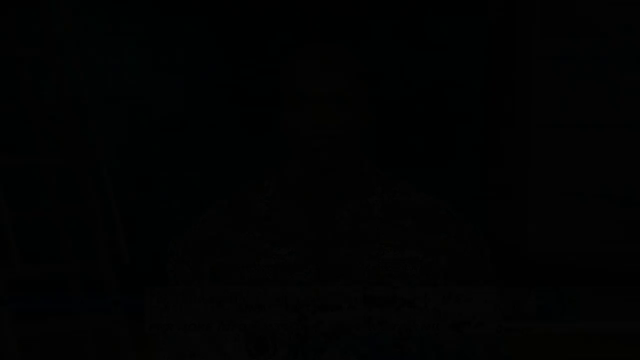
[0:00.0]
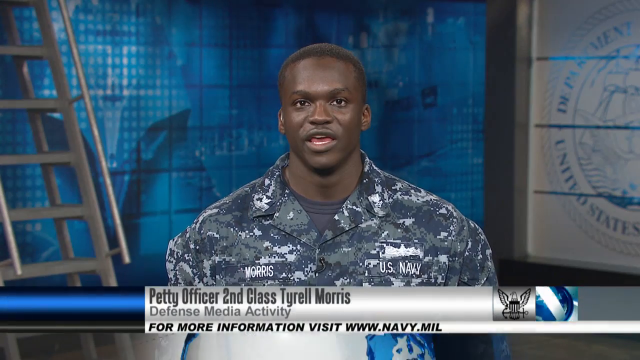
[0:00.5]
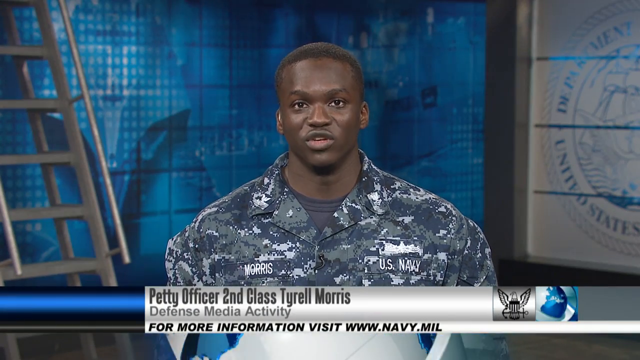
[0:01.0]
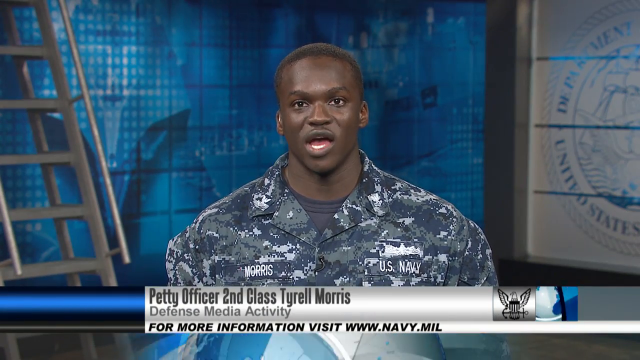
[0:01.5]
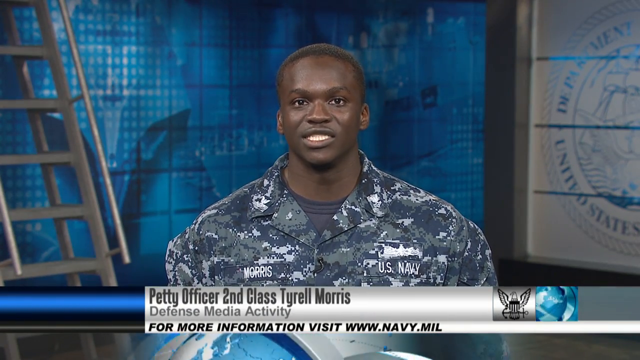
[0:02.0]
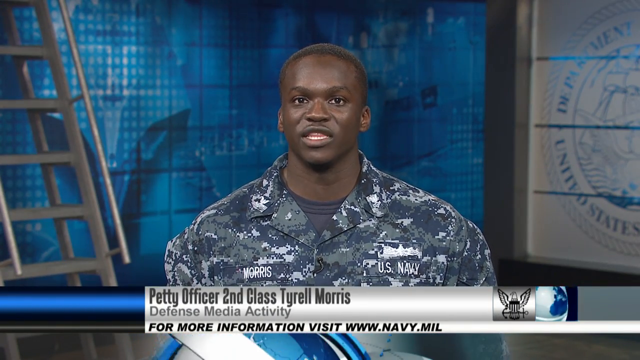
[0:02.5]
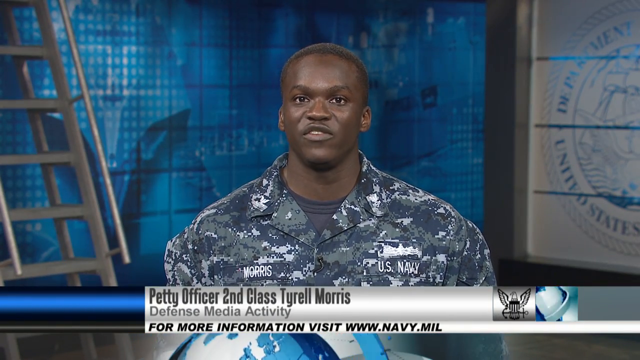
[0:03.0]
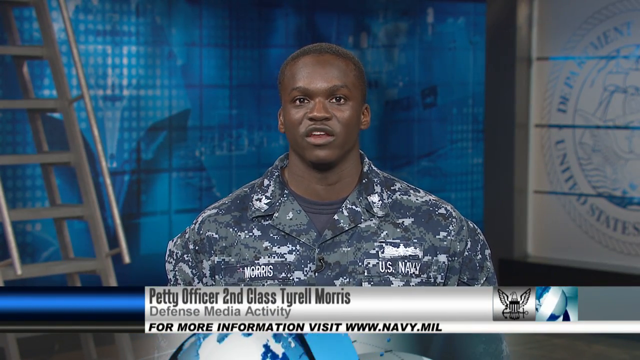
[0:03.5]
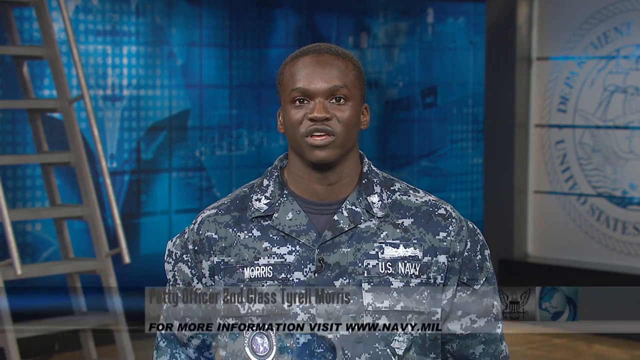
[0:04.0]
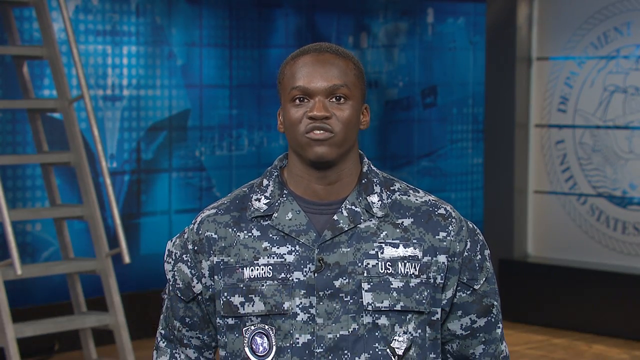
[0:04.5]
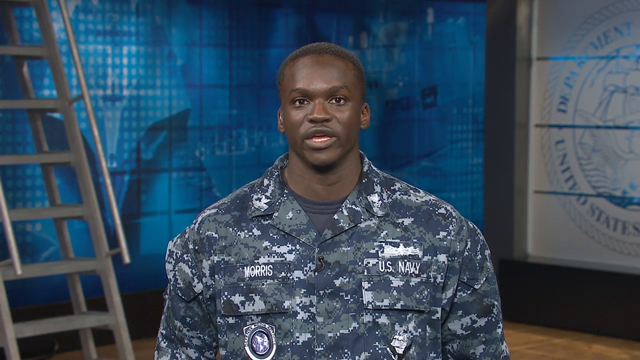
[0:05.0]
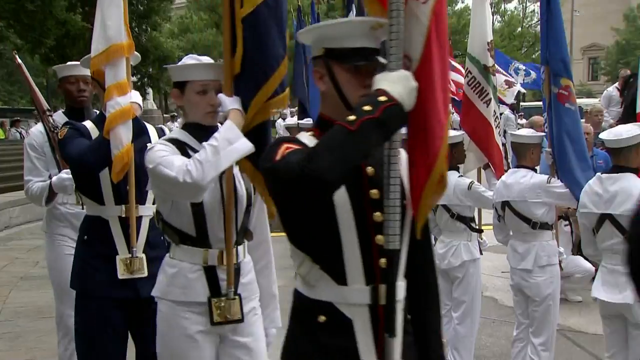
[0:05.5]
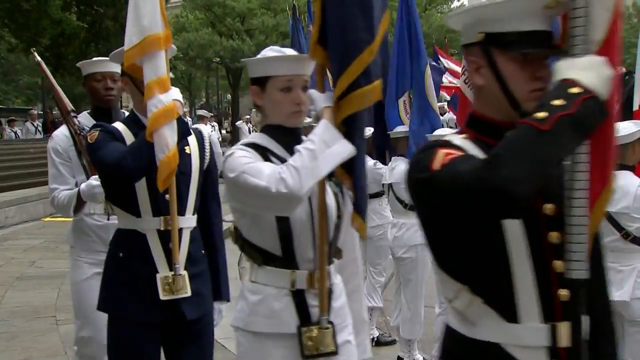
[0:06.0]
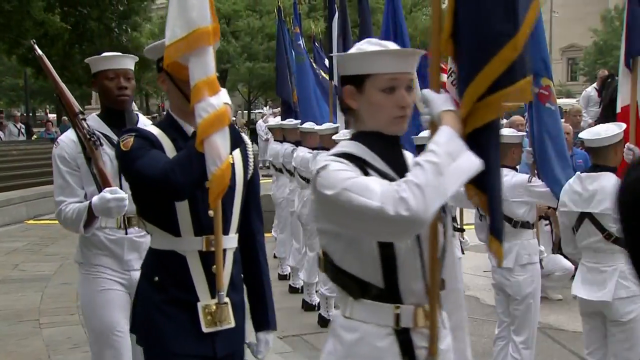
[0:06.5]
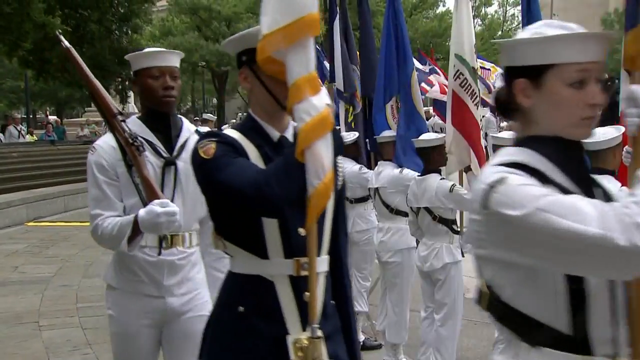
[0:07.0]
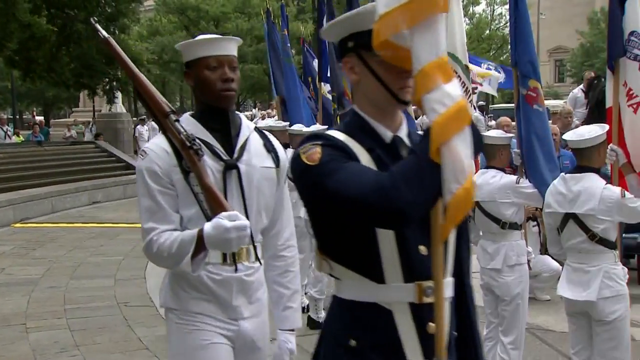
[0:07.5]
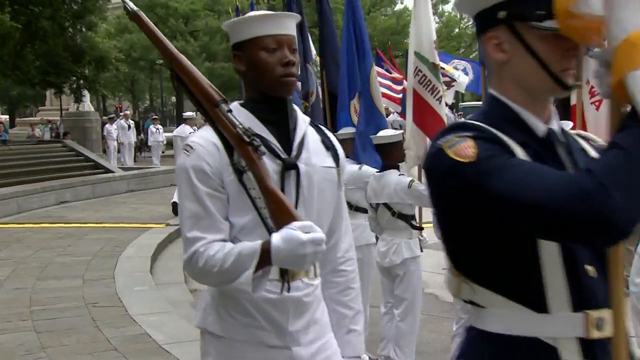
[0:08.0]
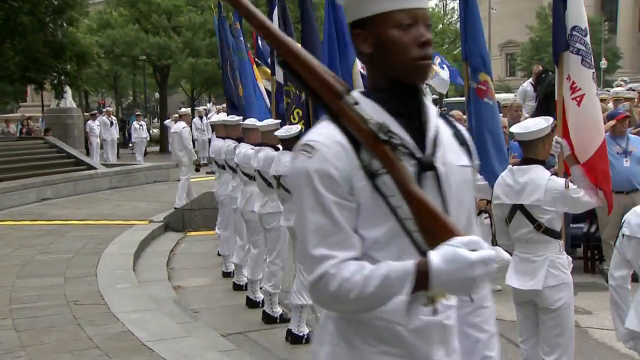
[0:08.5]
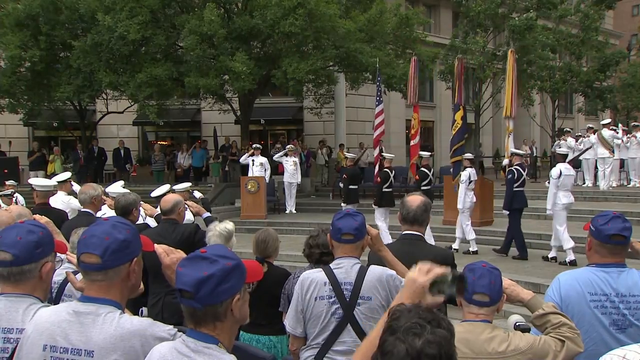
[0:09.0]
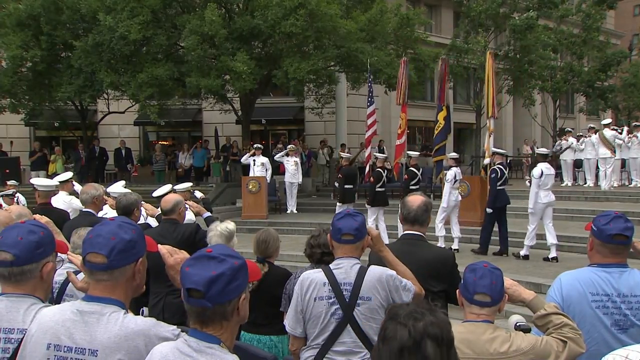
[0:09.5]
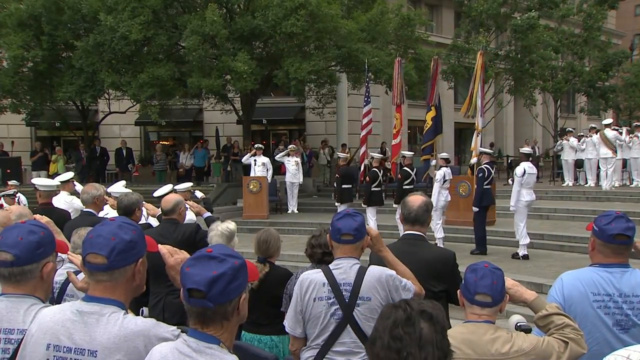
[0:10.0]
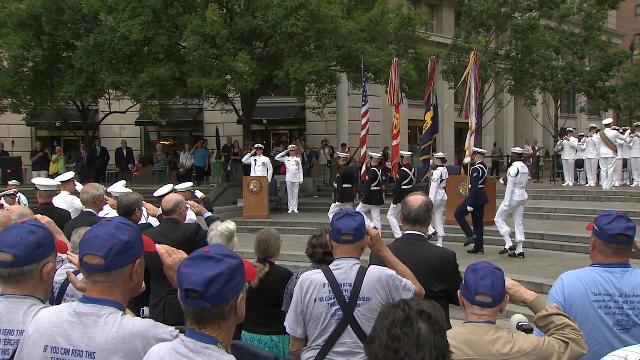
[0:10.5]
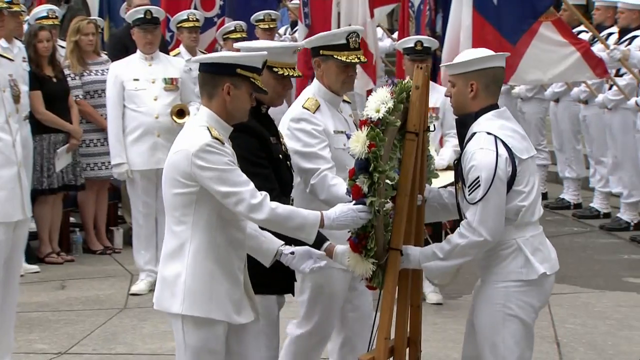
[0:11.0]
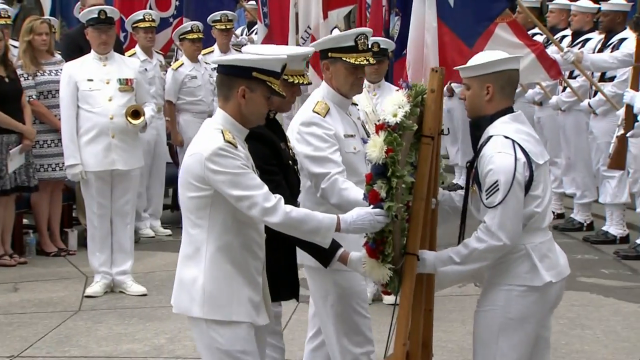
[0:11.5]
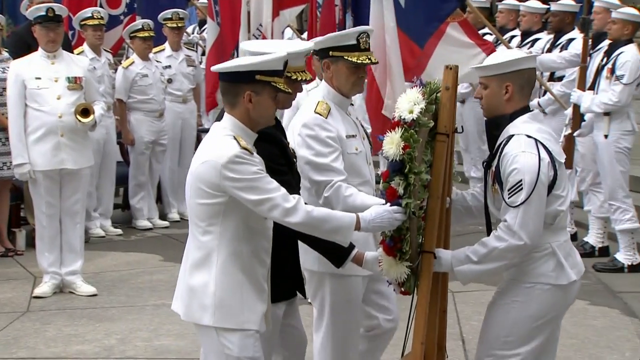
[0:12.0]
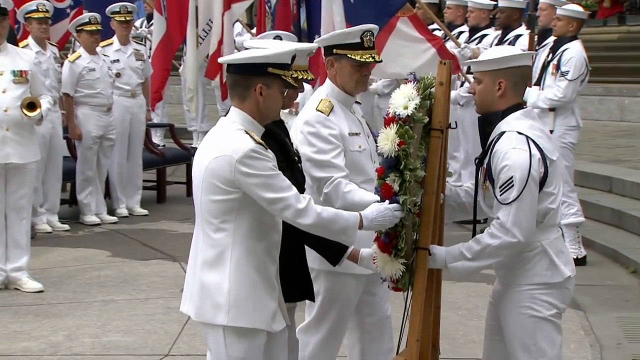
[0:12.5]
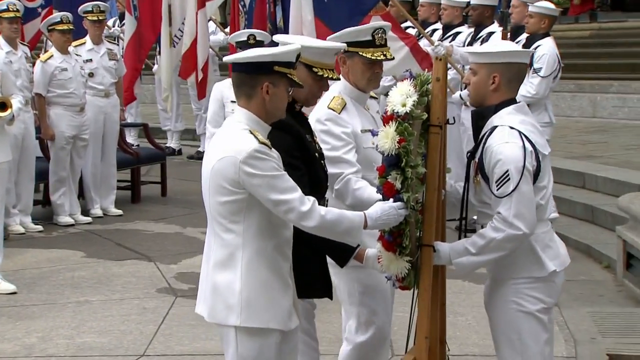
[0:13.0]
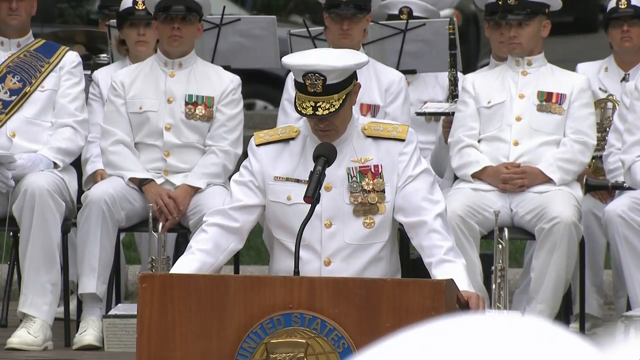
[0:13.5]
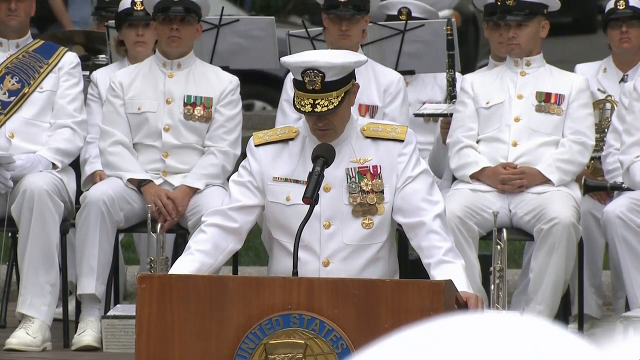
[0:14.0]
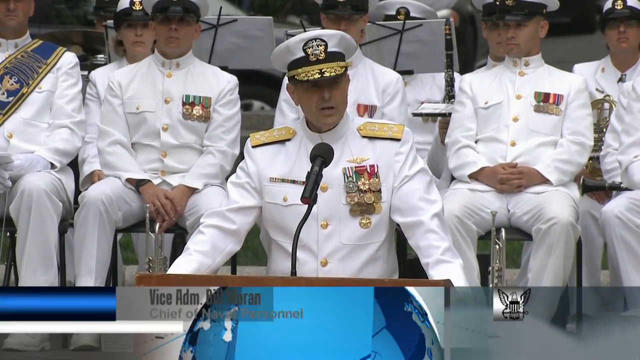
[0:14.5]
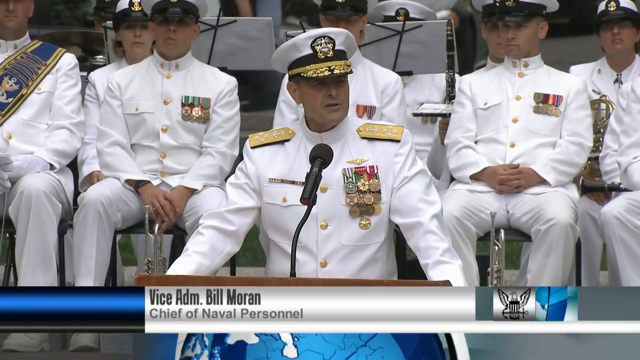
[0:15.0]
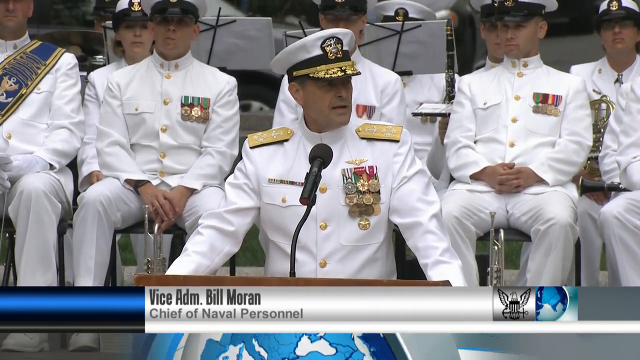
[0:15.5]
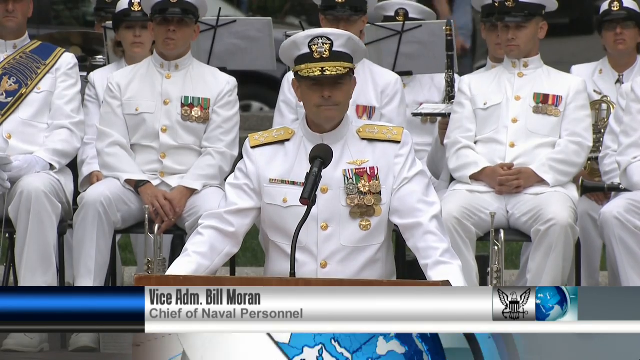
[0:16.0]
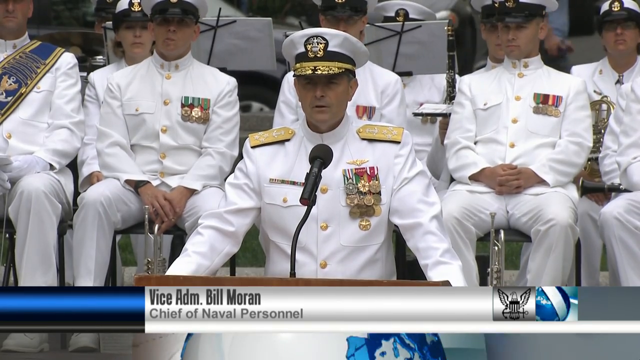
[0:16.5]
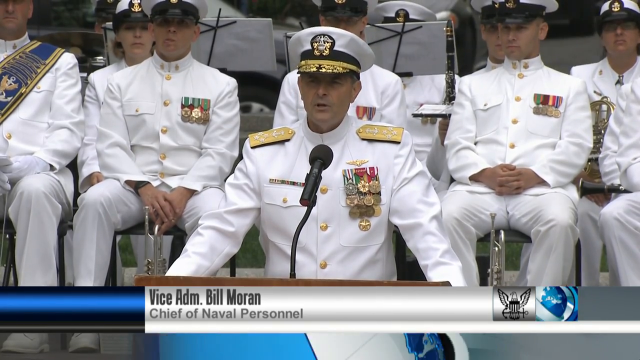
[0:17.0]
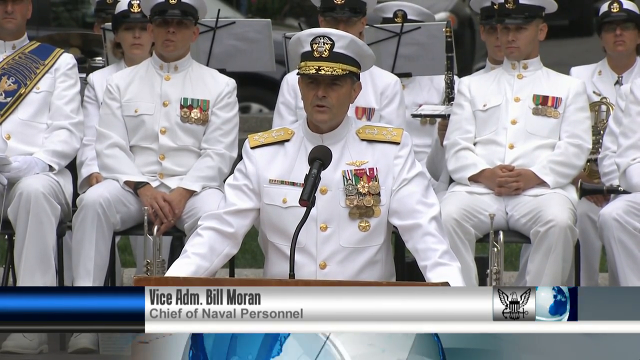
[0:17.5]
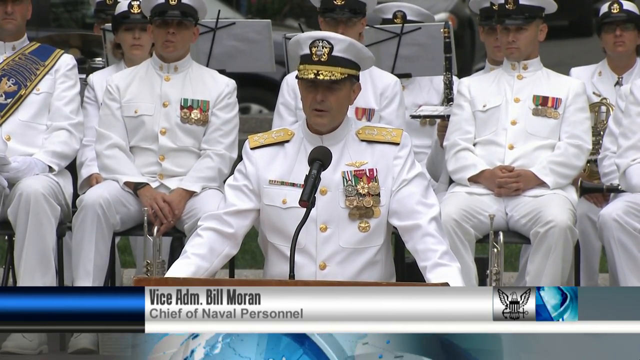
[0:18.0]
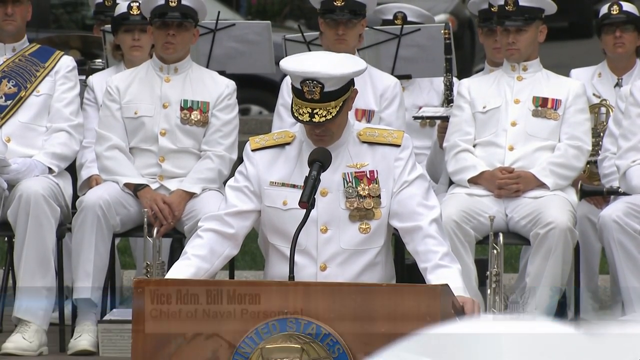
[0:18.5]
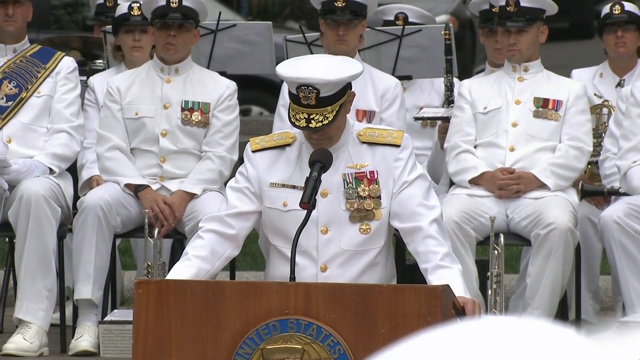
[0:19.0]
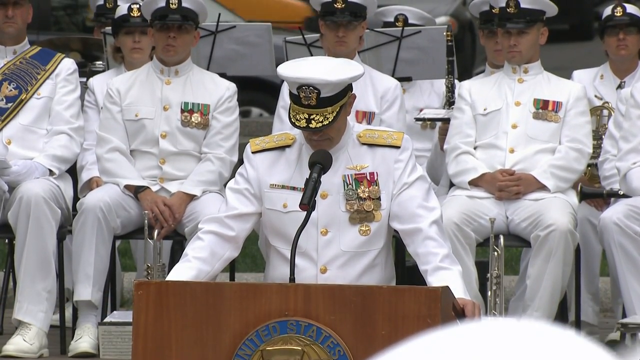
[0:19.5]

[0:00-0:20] Petty Officer 2nd Class Tyrell Moore is shown in a U.S. Navy camouflage uniform. Various people in uniforms are saluting. Vice ADM Bill Moran, Chief of Naval Personnel, speaks at a podium. It looks to be some sort of ceremony or funeral service for a military member who died while serving.